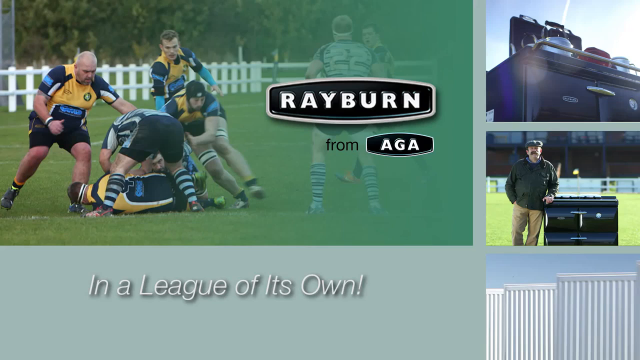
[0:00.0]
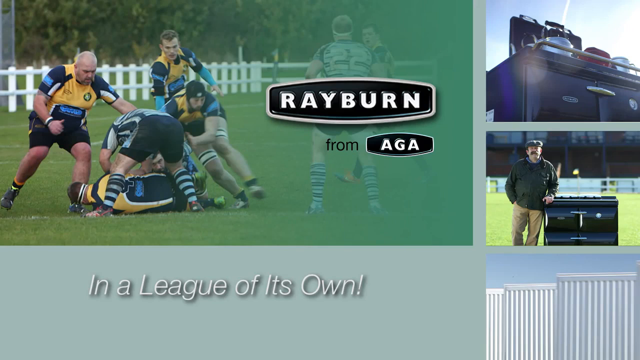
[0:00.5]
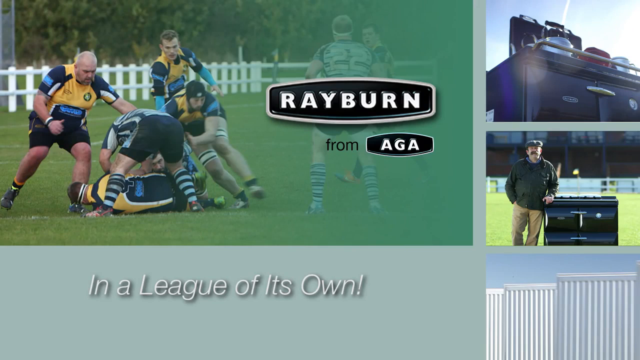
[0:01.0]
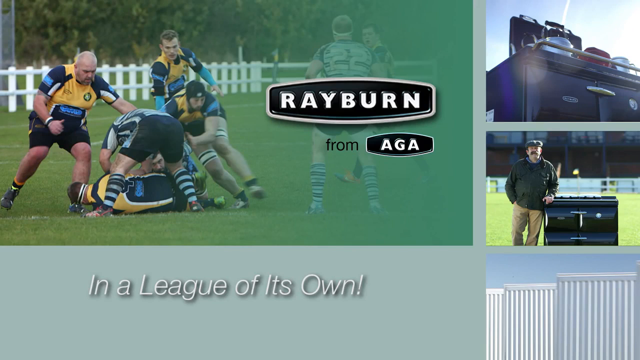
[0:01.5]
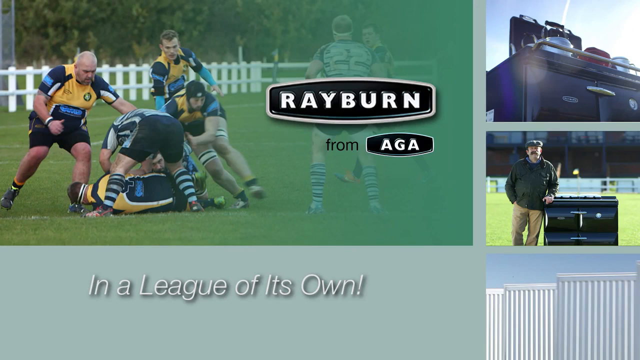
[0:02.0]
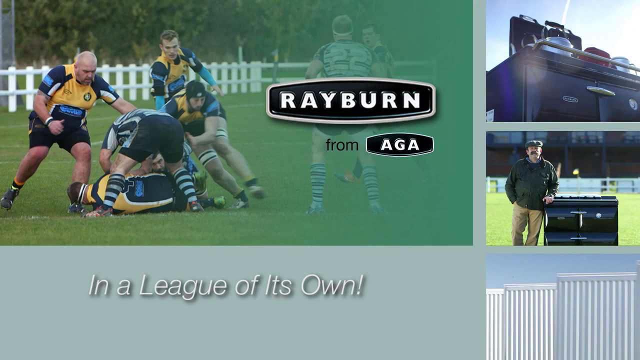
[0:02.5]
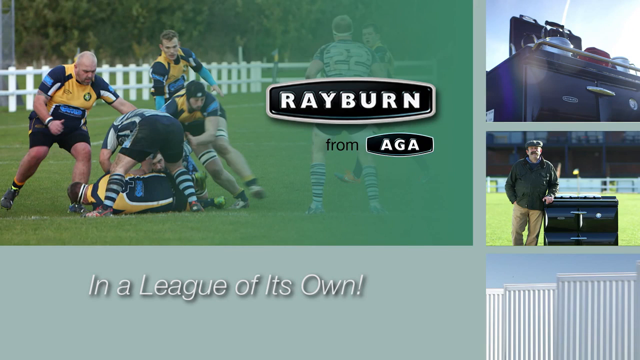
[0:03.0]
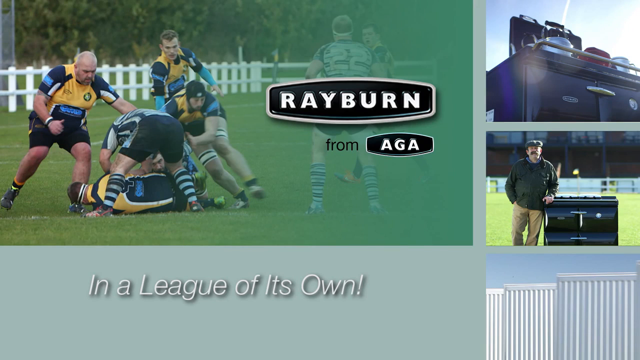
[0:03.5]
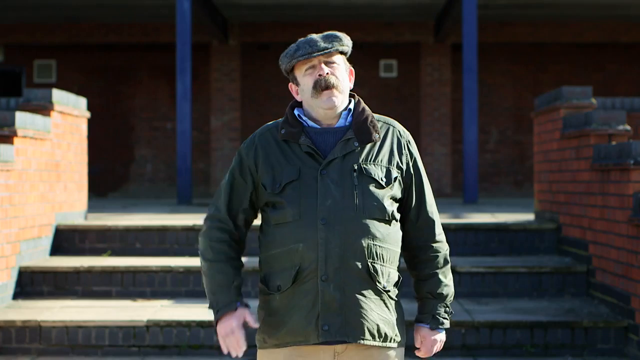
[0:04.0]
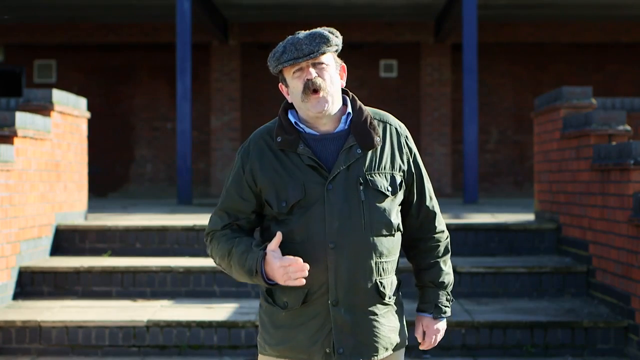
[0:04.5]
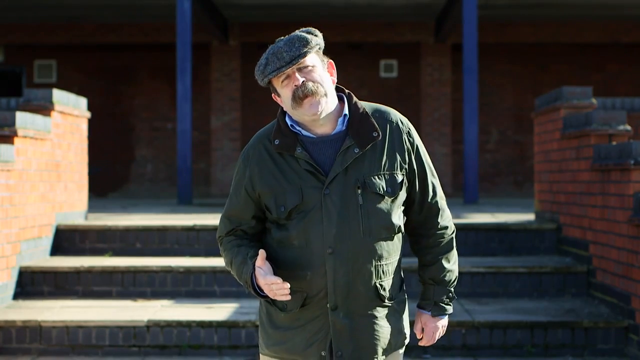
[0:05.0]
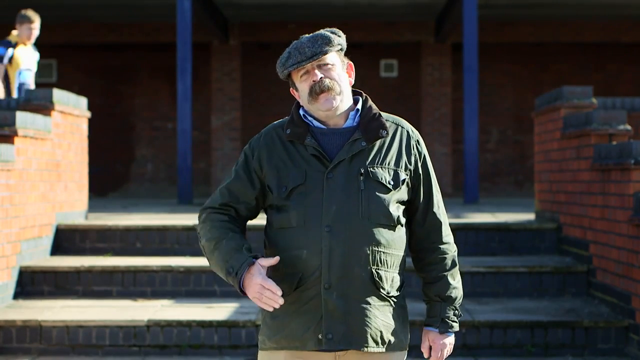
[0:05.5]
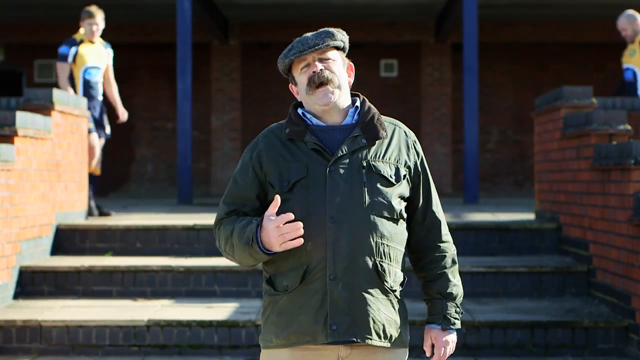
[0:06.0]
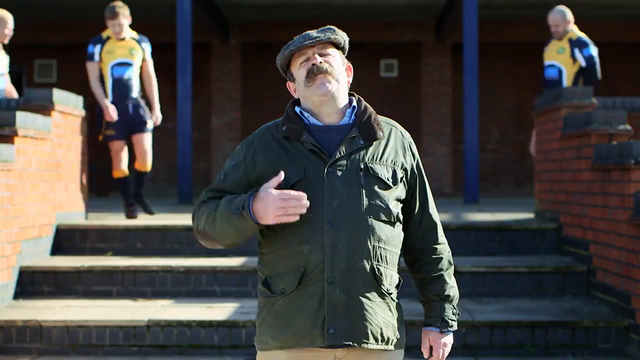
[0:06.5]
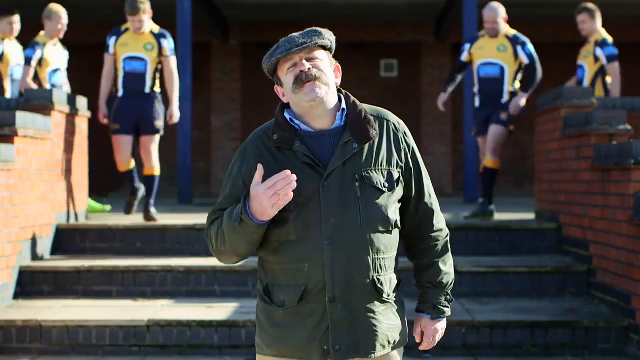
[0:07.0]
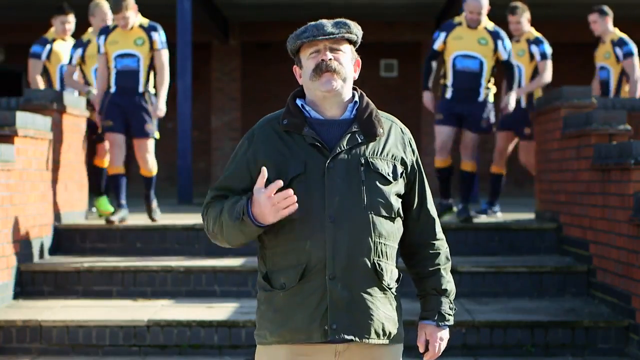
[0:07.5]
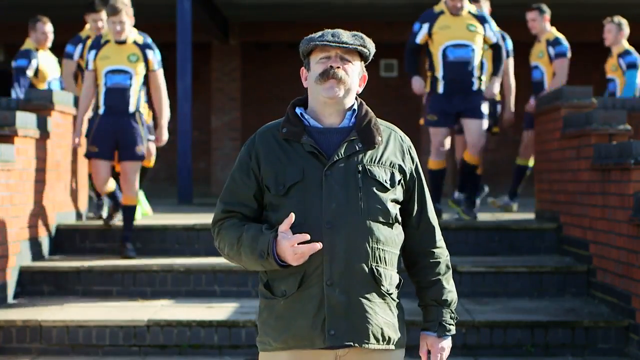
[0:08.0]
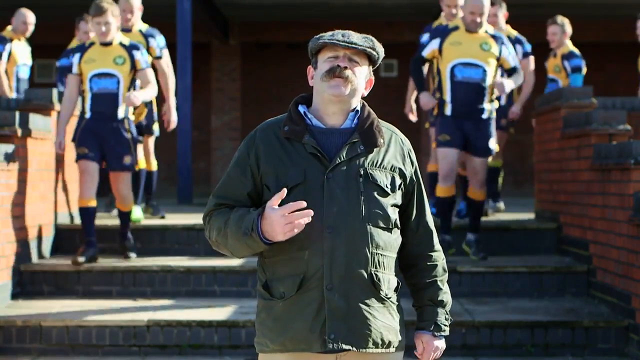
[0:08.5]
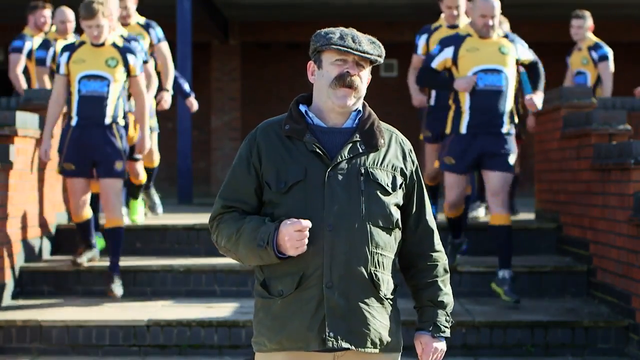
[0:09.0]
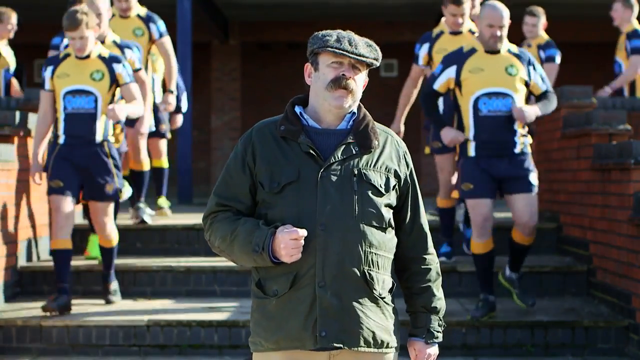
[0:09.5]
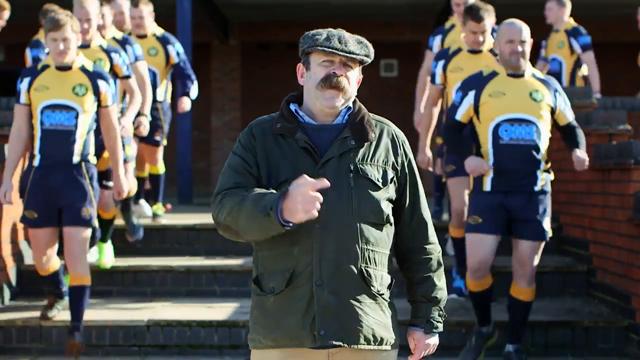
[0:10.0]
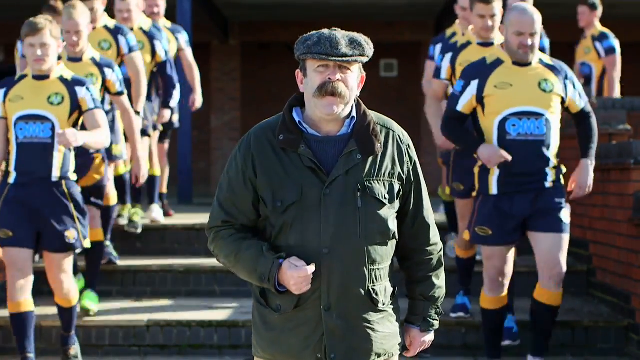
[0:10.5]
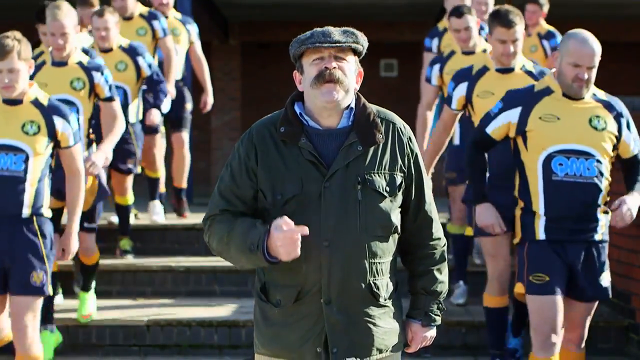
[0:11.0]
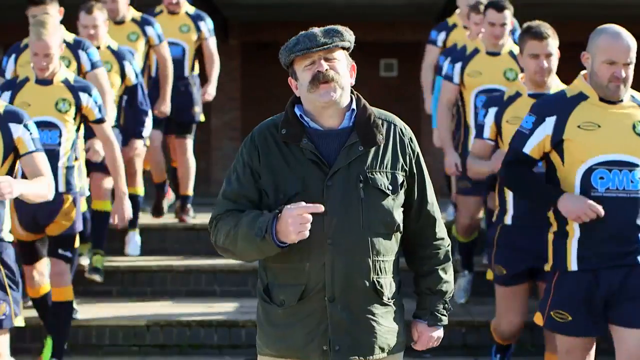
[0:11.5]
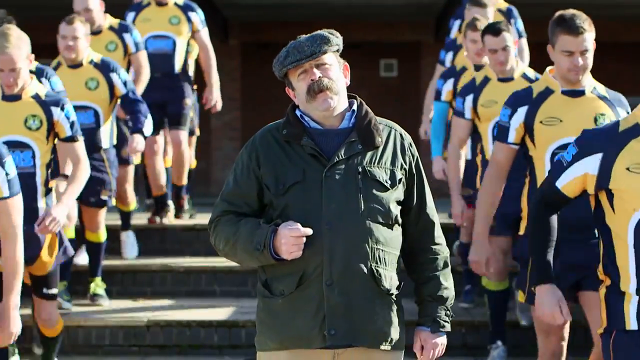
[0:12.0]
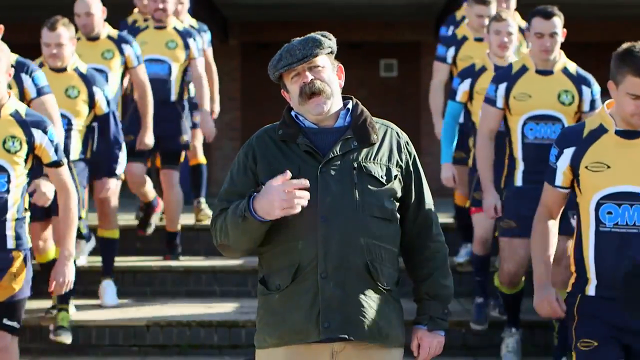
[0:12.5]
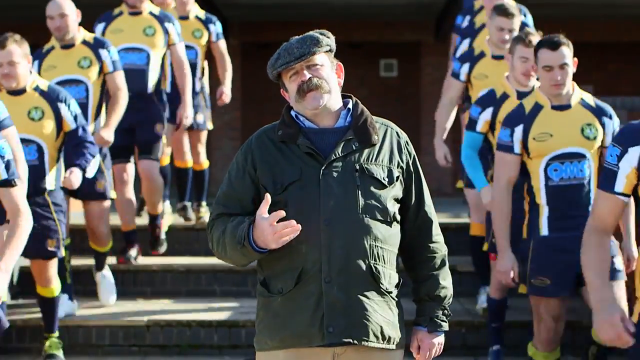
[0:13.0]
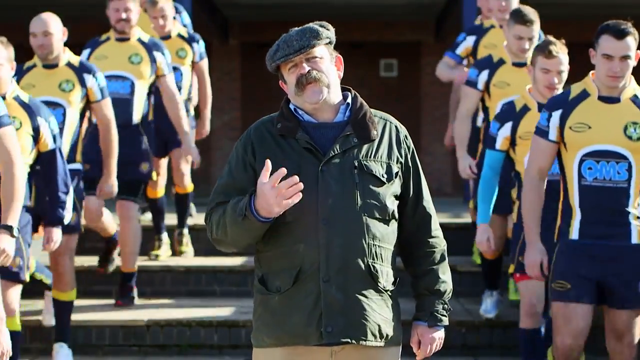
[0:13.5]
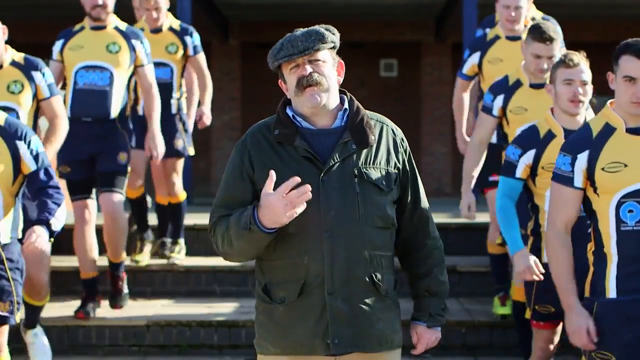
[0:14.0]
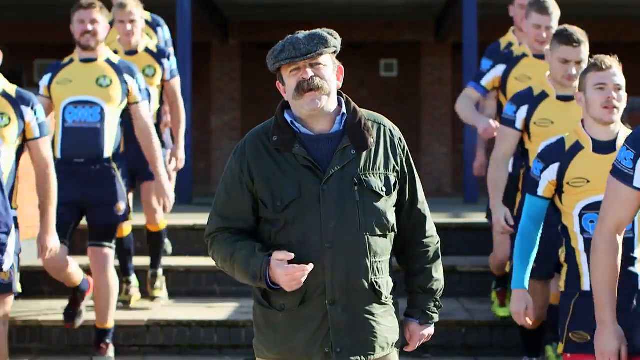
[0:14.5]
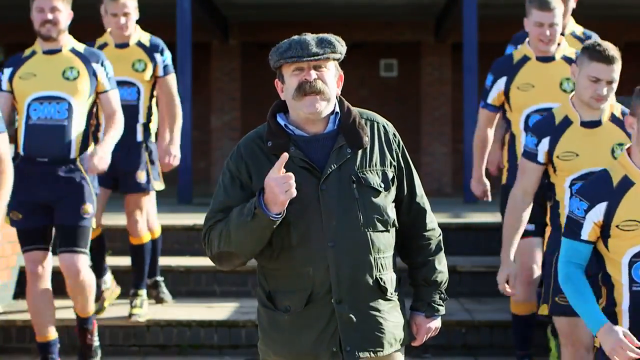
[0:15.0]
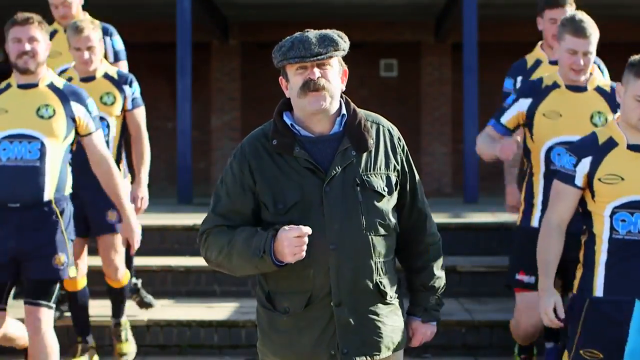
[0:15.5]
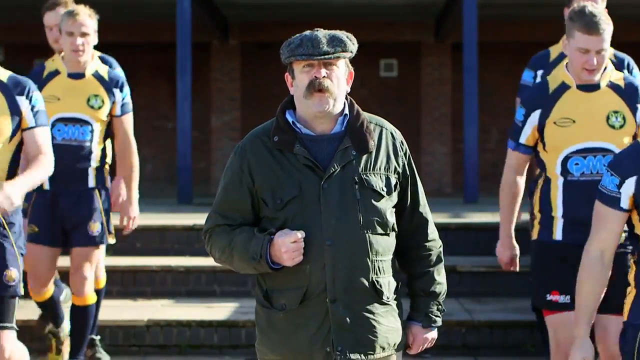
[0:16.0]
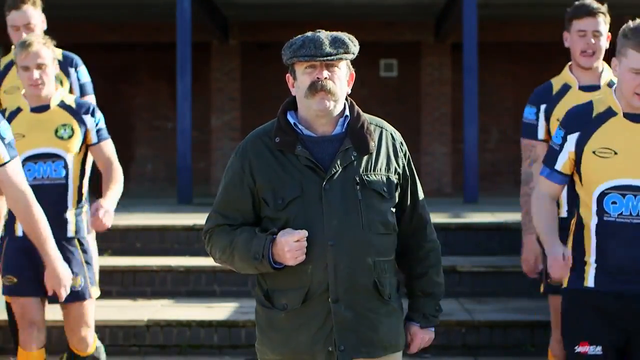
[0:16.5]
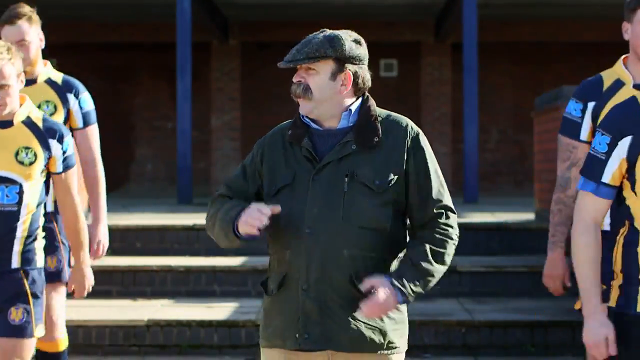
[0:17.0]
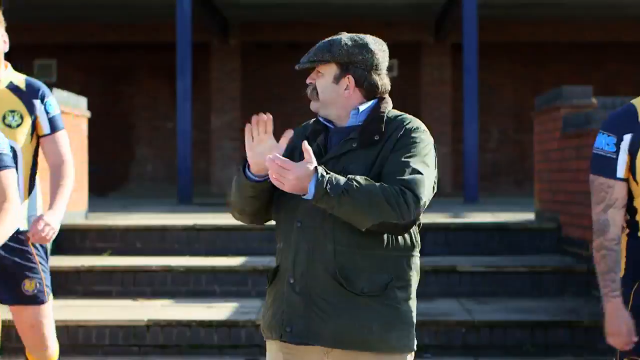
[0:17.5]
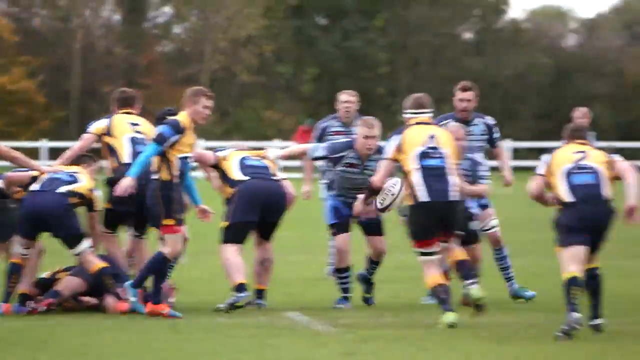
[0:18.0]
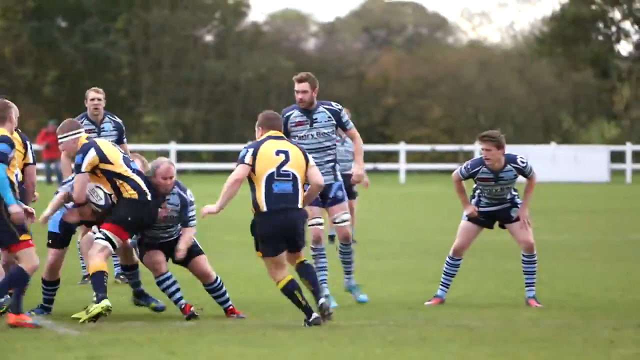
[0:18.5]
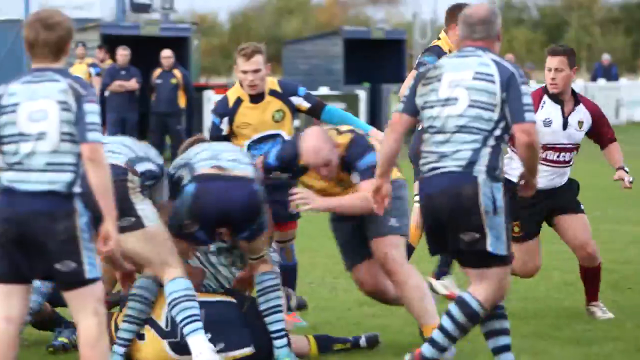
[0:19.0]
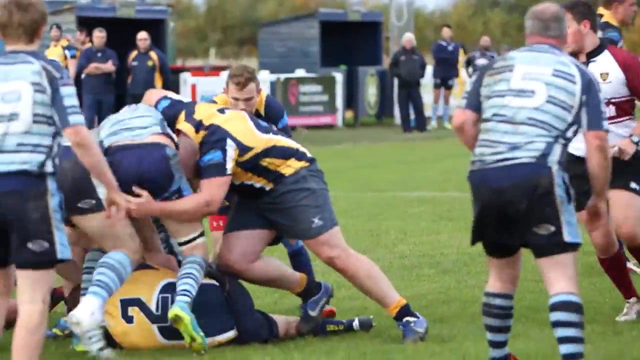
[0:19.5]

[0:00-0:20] The video opens on a collage of photographs. The main image, in the upper left, appears to show several rugby players of different ages playing on a rugby field. To the right, text reads "Rayburn from AGA". Two more pictures are on the right: one looks almost like a grill seen from the ground looking up at it, and the other shows a person standing next to this grill, kind of leaning against it. Along the bottom is a kind of light green area with white text reading "in a league of its own". After a few seconds on this image, a man appears wearing a gray cap and a green jacket, with a mustache, standing on some steps and kind of talking into the camera. As he talks, several rugby players come down the steps on each side of him and pass him. He uses his right hand for emphasis, kind of making a fist and moving it up and down as he speaks. The scene then moves to the rugby field, where rugby players run and tackle each other, at one point forming a tackling huddle of some sort.